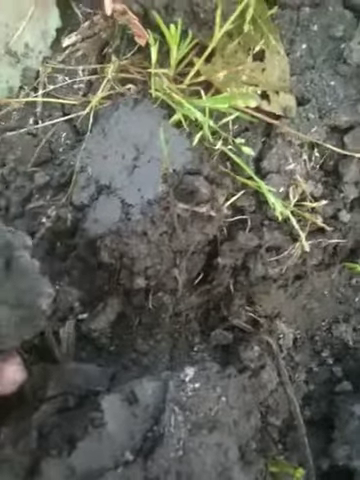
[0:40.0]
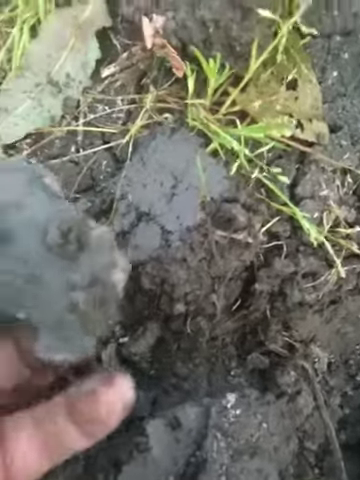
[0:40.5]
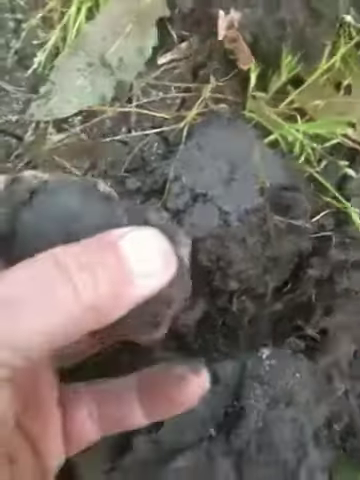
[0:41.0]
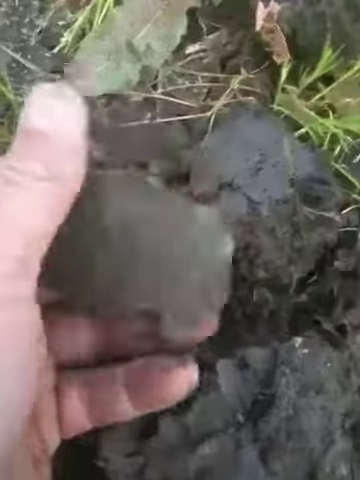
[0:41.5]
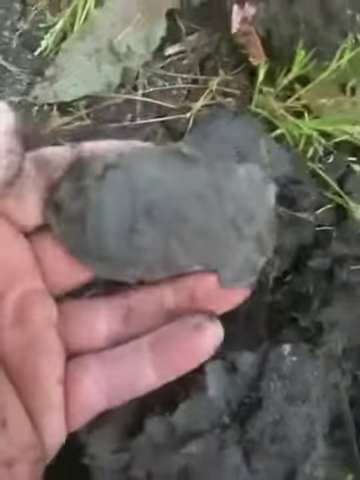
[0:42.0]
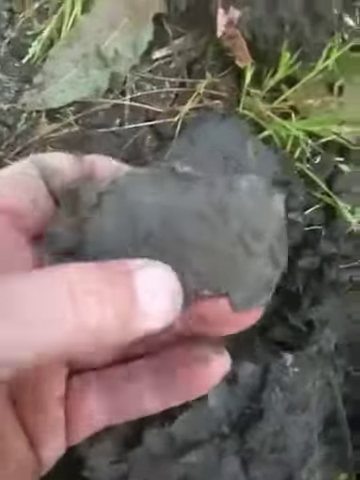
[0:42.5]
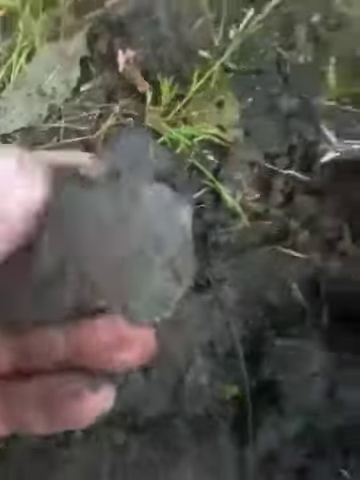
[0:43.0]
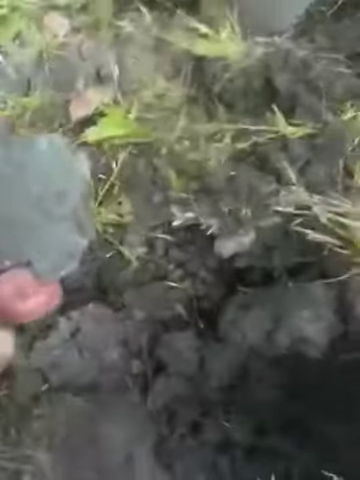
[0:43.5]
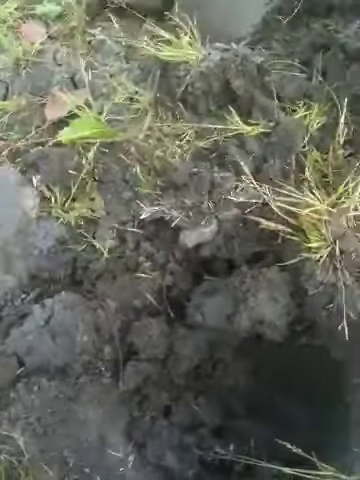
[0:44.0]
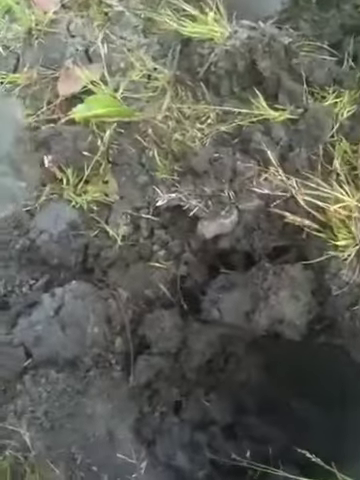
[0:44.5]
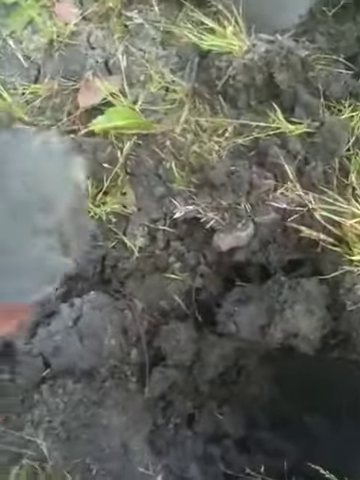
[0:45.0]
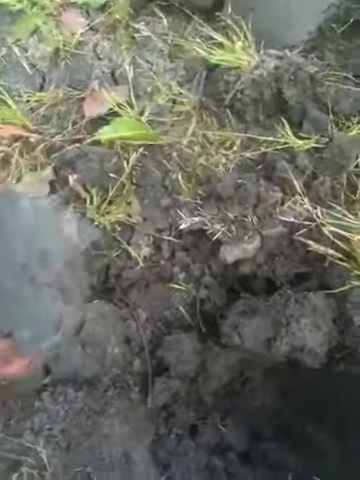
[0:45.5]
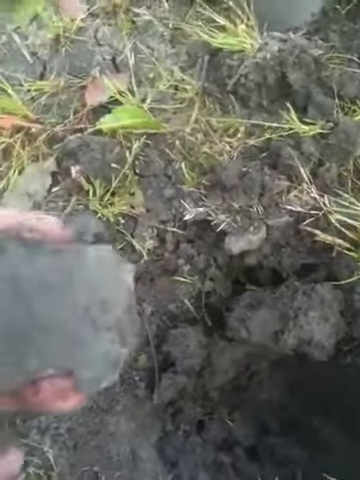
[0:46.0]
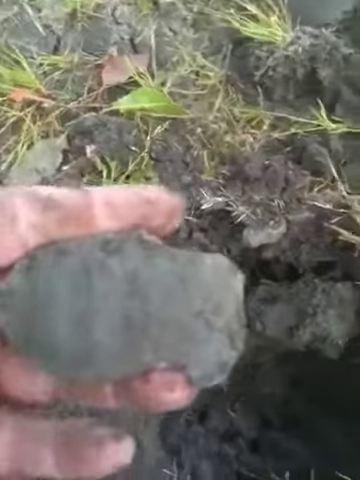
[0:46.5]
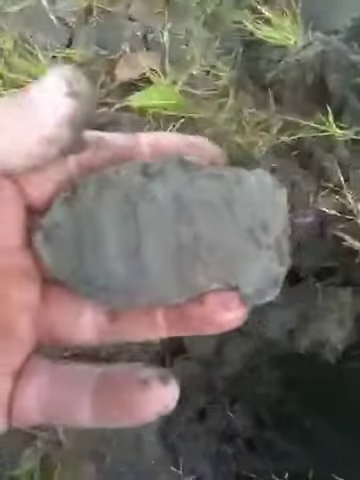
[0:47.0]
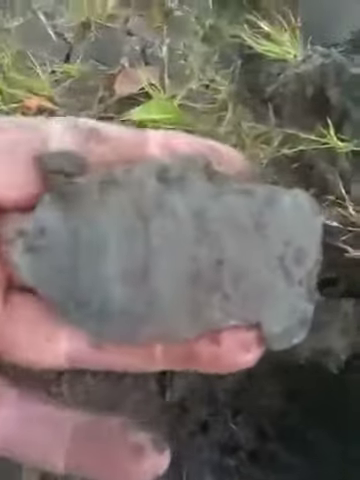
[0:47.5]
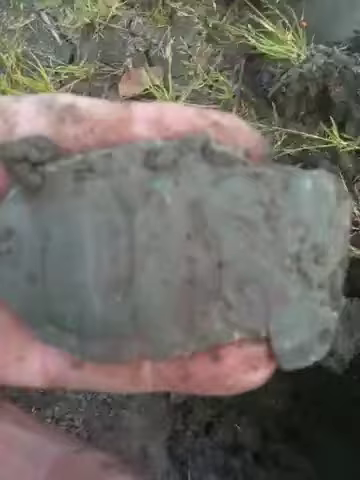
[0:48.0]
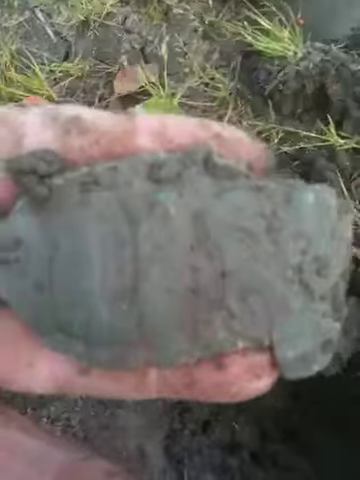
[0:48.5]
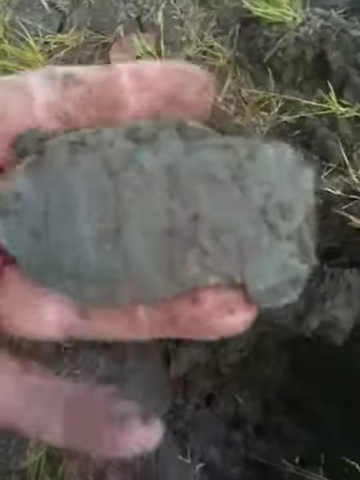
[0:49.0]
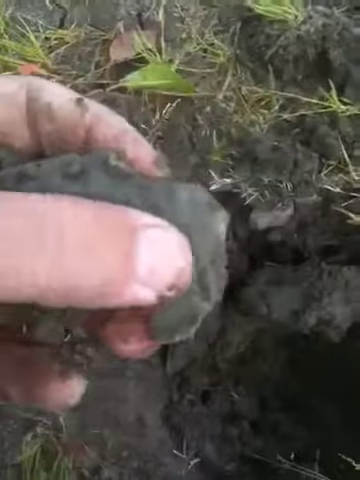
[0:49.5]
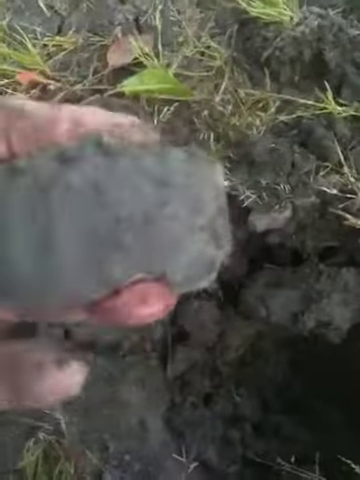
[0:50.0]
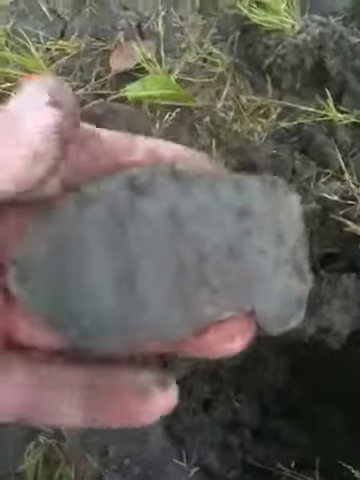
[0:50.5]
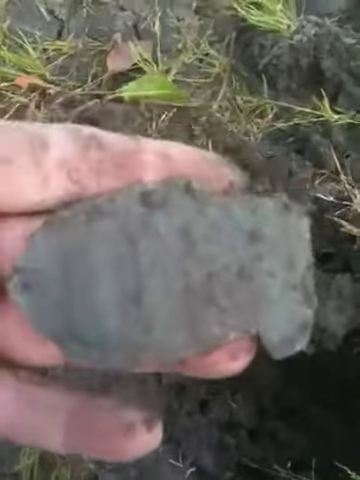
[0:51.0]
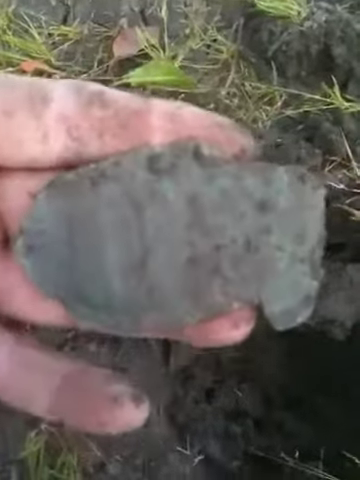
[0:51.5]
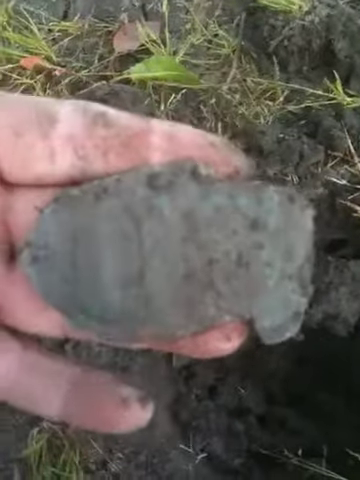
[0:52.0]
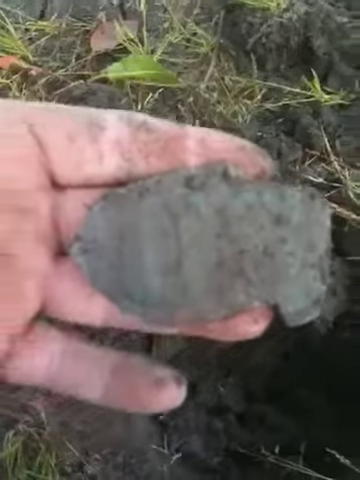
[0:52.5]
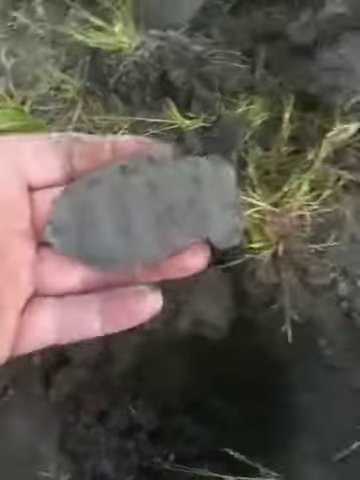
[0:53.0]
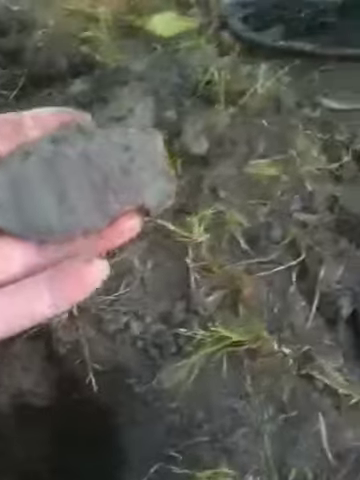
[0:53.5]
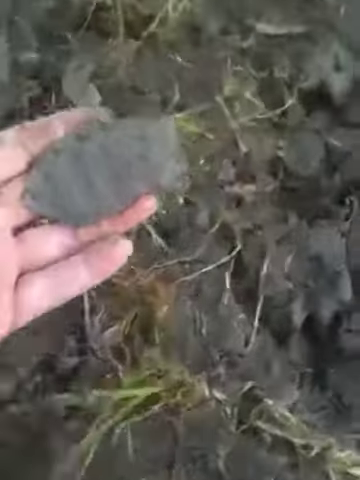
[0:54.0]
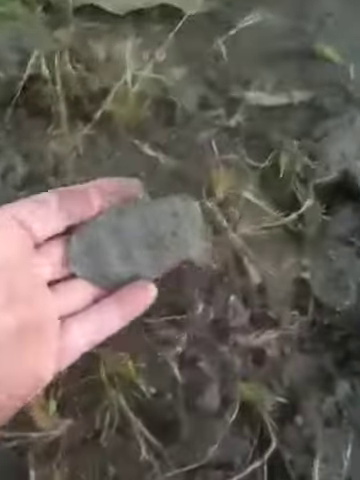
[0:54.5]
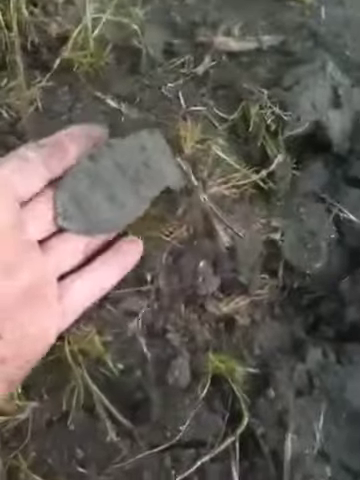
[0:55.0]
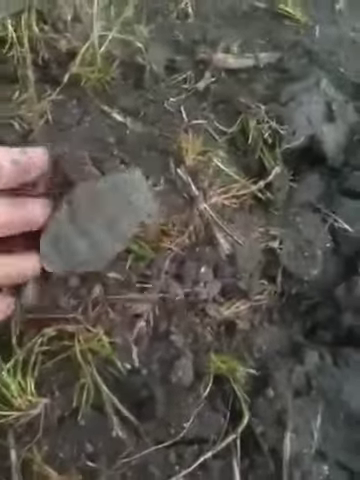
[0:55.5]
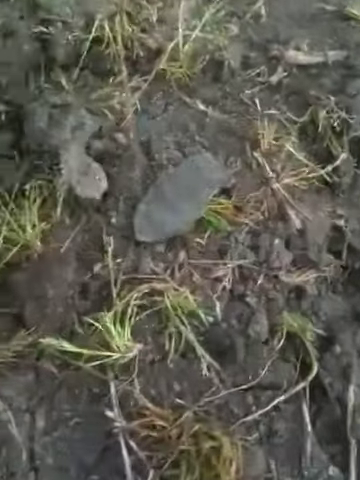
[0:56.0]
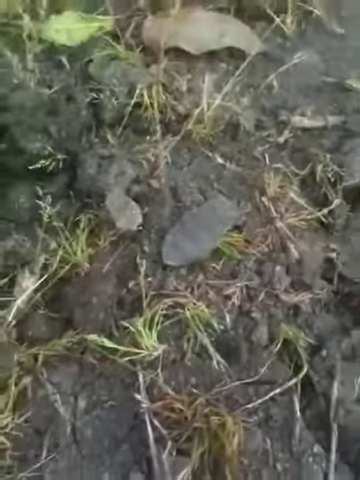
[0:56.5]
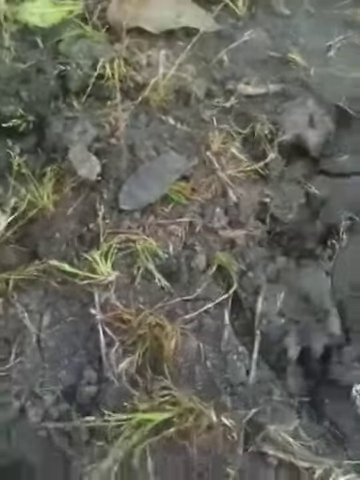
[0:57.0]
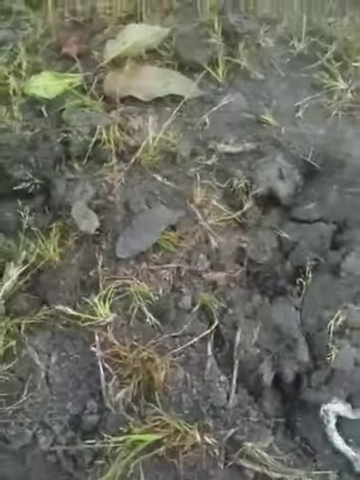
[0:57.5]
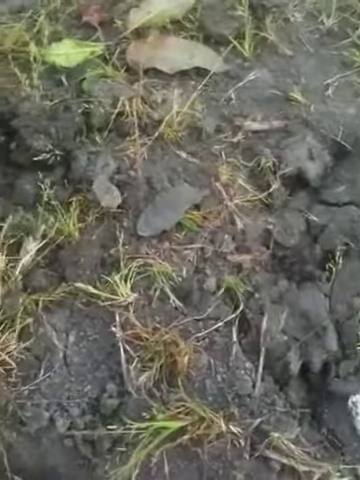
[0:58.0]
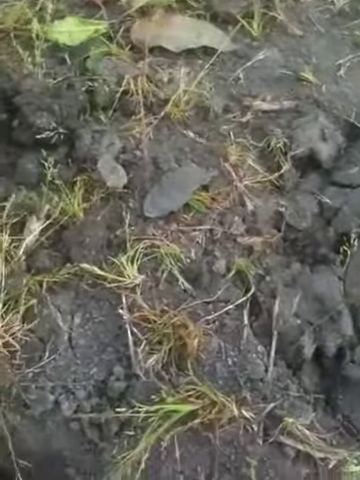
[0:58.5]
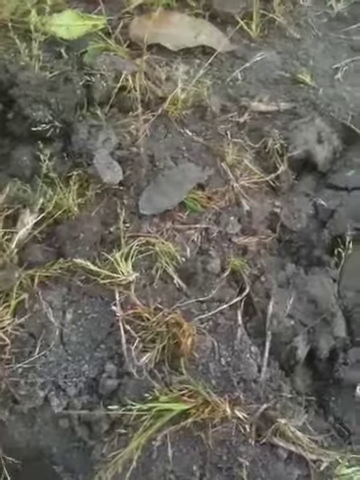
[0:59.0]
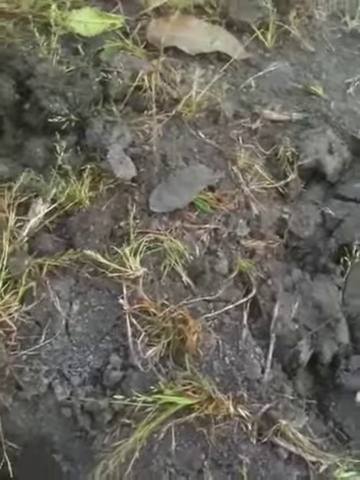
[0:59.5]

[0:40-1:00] In a vertical camera view, a white male holds a rock, mineral or fossil in his left hand in an outdoor setting. Below the camera view is a hole about a foot deep, with various grass, sprigs and vegetation interspersed; the environment is sort of wet and muddy. The opaque rock in his hand is somewhat covered with mud, and he wipes the mud off the fossil. He then stands up straight, holding it toward the camera, and looks down into the hole in front of him, which holds various large clumps of mud and clay, with more vegetation around its outside. He places his hand in the center left of the screen with the rock fossil in it. Both his hand and the fossil are covered in mud, but as he clears it off more, it shows a pointed oblong shape. The camera focuses on it, and under the mud the rock is somewhat of a greenish, dark black hue. He places it on the ground and moves the camera back away from it, giving a wider shot of the rock and the muddy area around it.